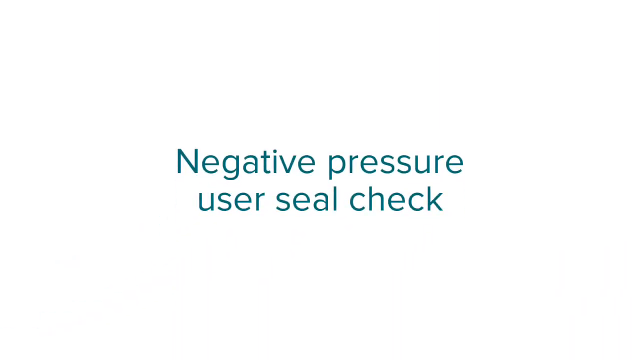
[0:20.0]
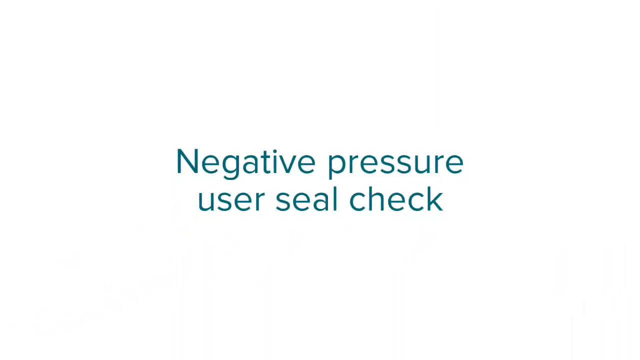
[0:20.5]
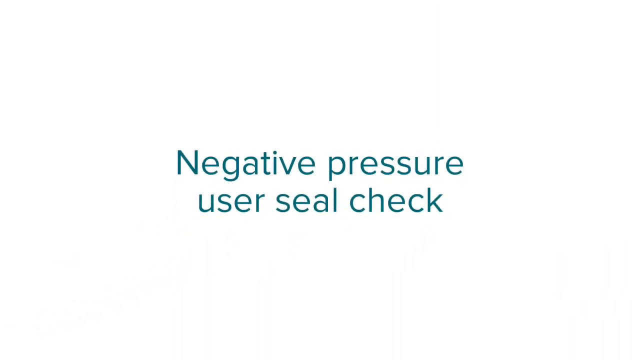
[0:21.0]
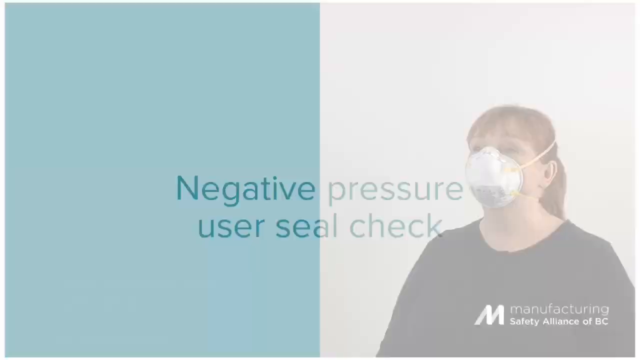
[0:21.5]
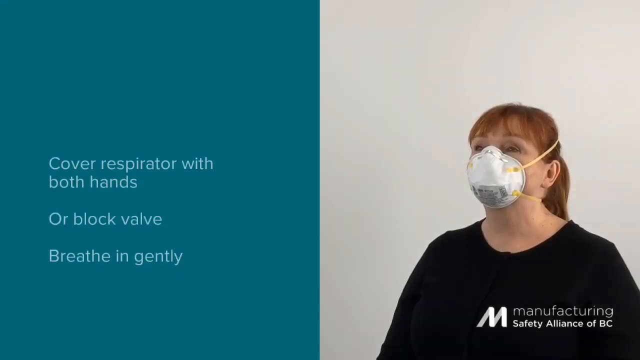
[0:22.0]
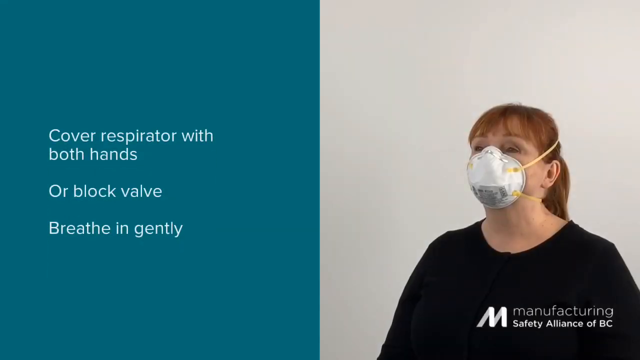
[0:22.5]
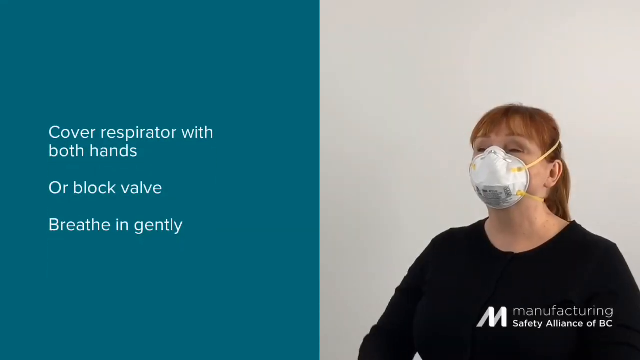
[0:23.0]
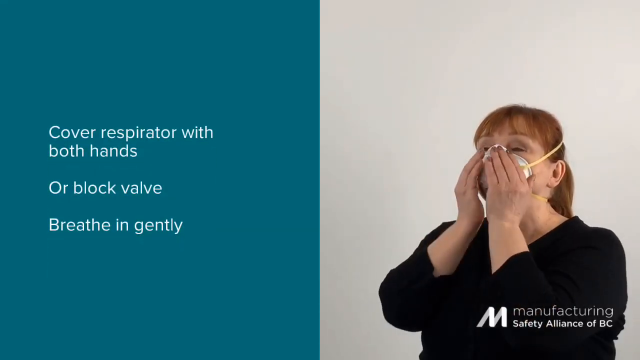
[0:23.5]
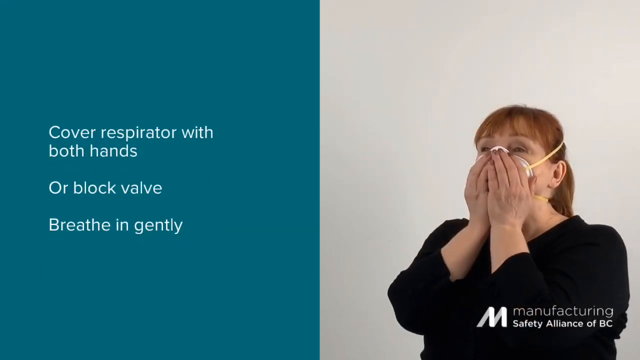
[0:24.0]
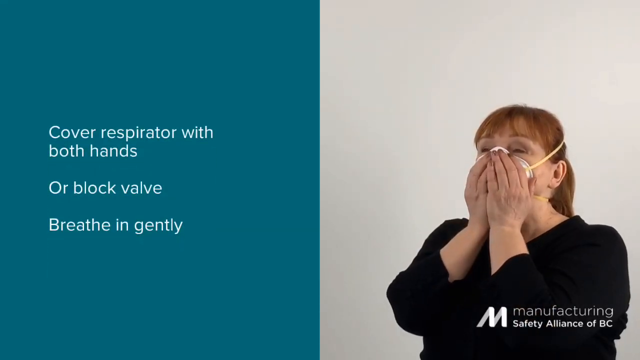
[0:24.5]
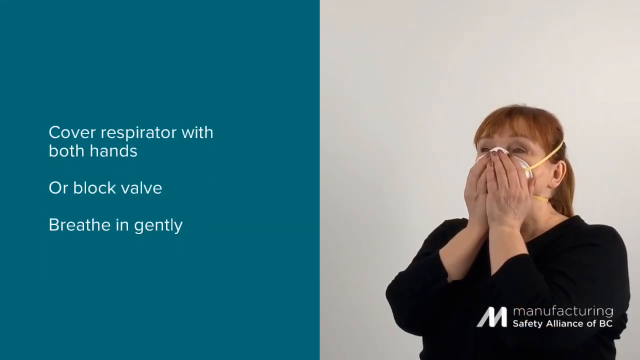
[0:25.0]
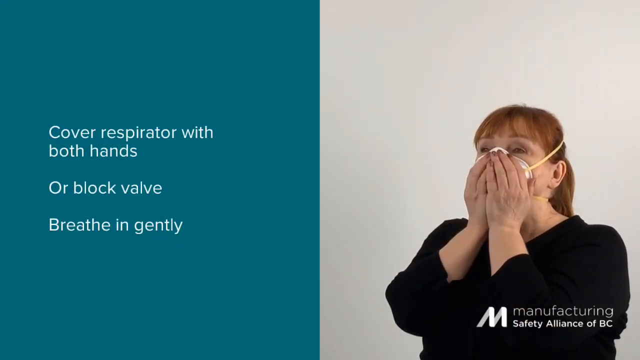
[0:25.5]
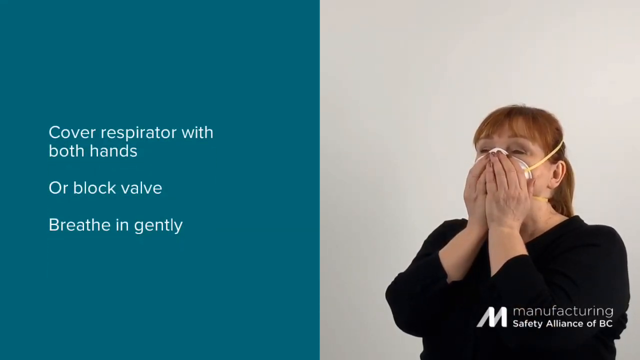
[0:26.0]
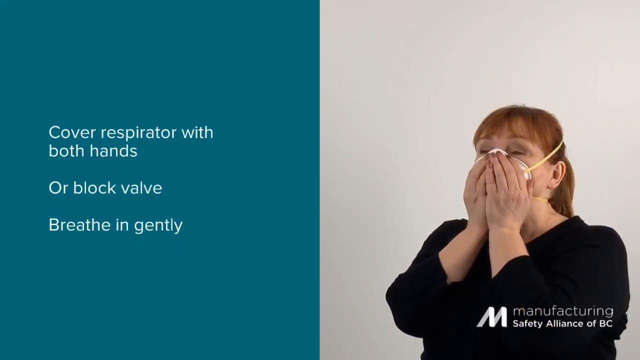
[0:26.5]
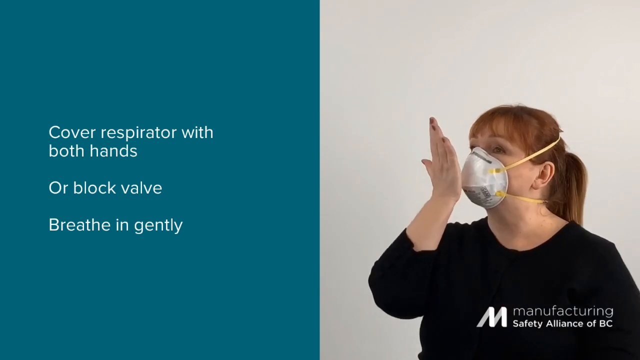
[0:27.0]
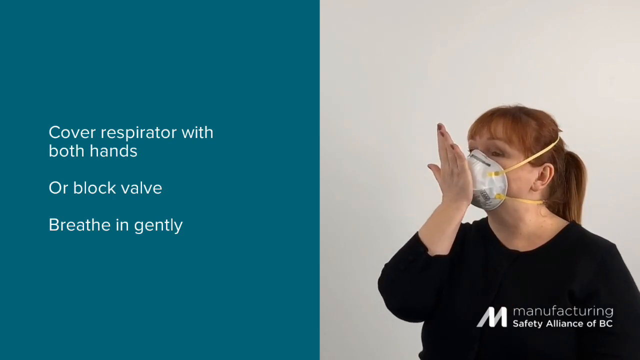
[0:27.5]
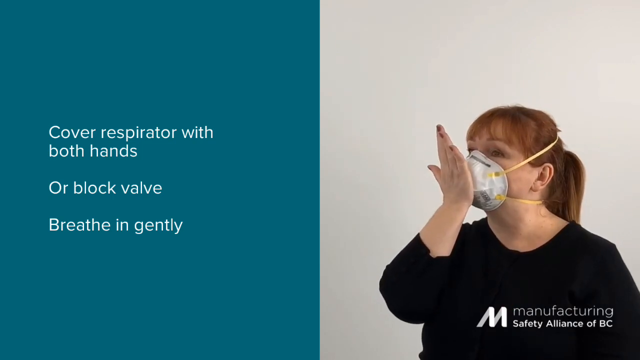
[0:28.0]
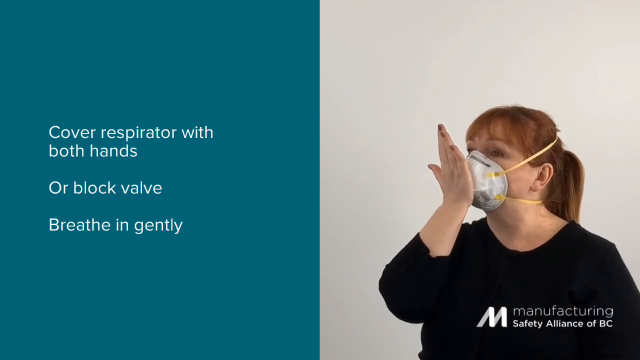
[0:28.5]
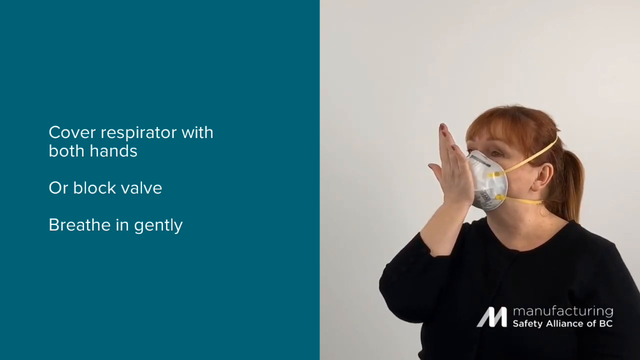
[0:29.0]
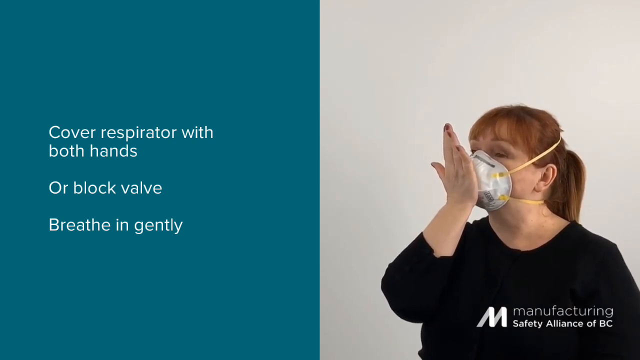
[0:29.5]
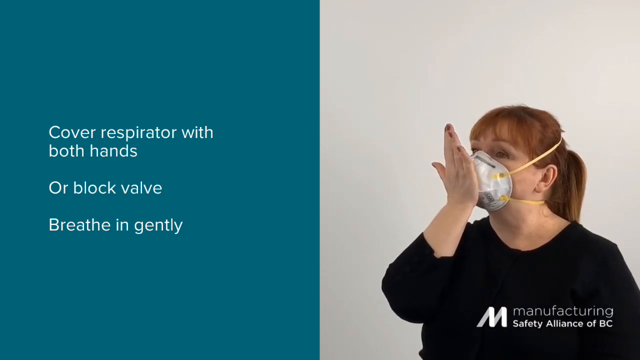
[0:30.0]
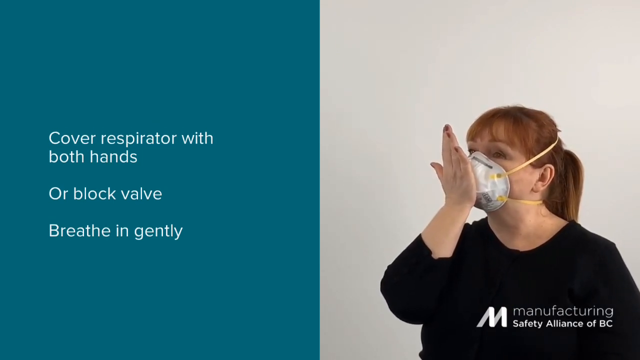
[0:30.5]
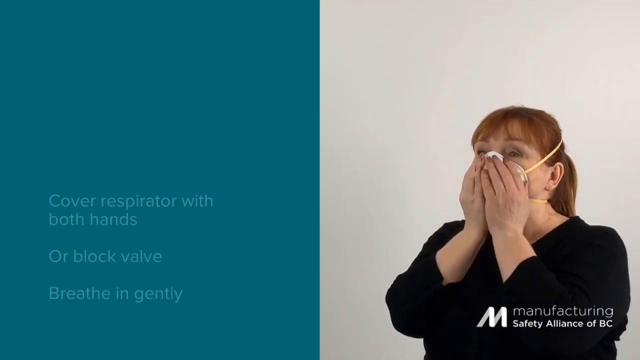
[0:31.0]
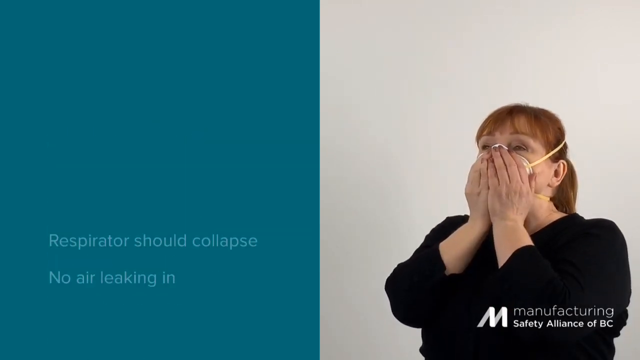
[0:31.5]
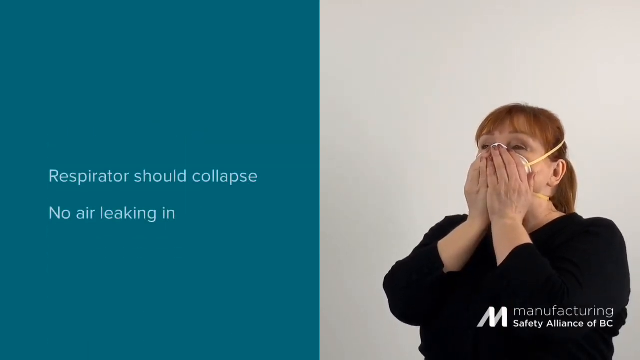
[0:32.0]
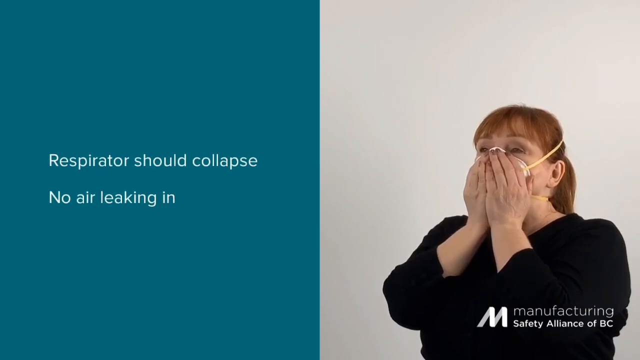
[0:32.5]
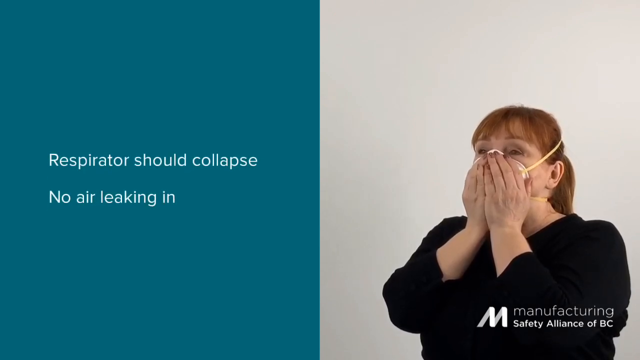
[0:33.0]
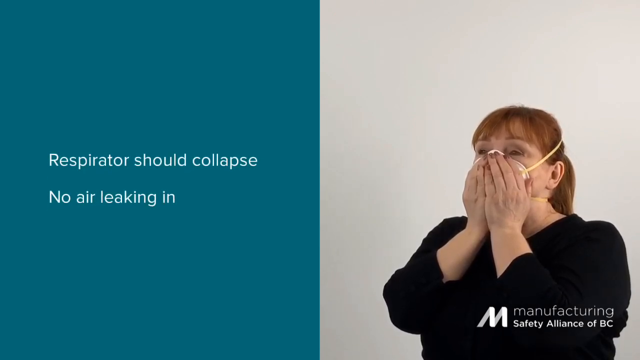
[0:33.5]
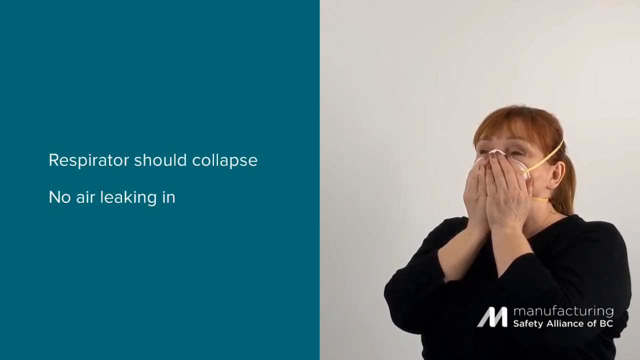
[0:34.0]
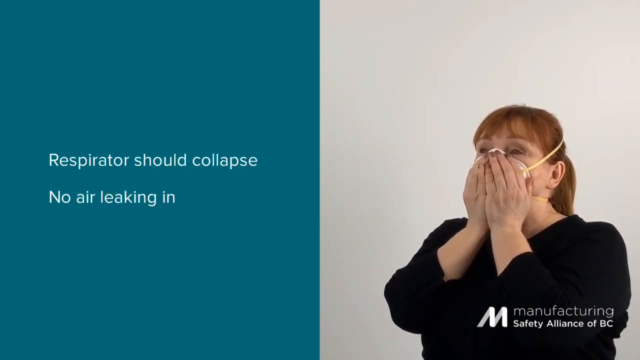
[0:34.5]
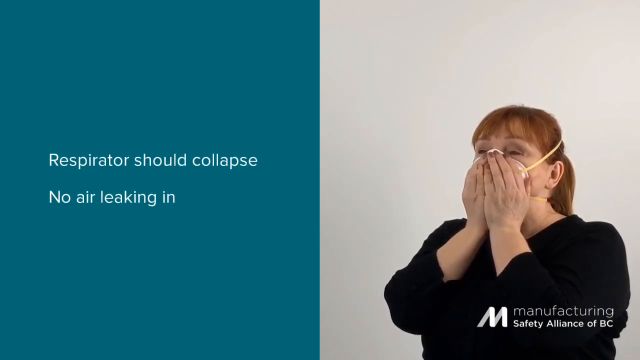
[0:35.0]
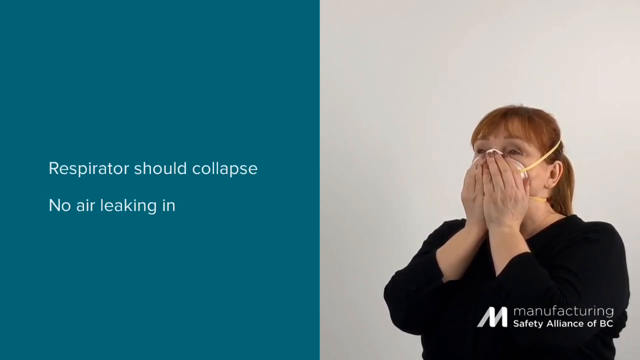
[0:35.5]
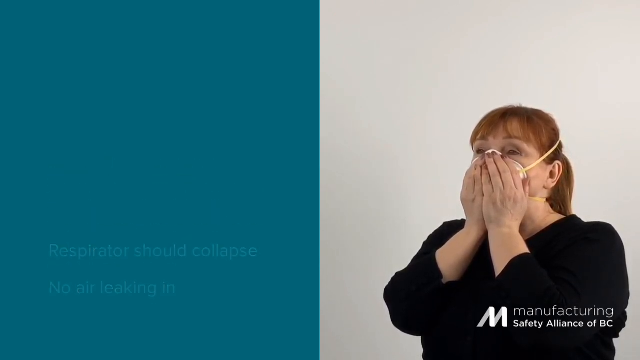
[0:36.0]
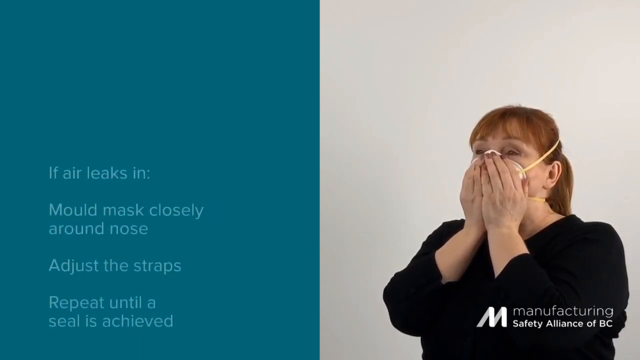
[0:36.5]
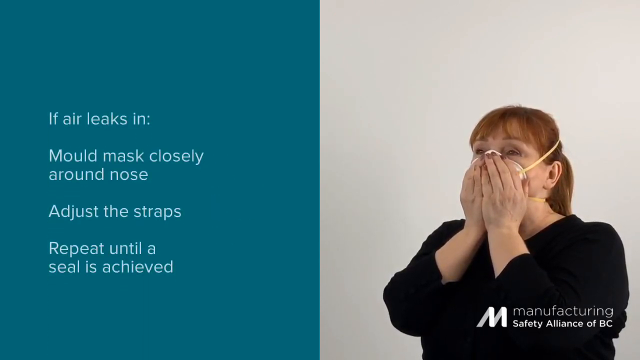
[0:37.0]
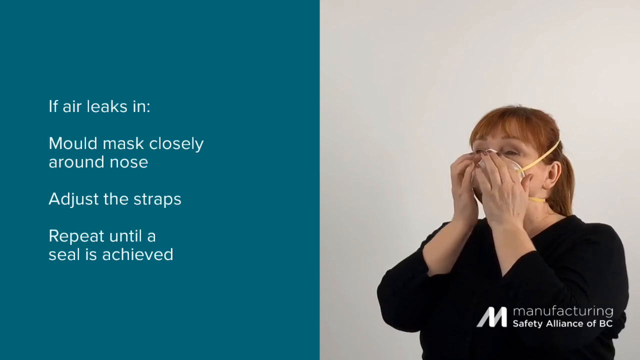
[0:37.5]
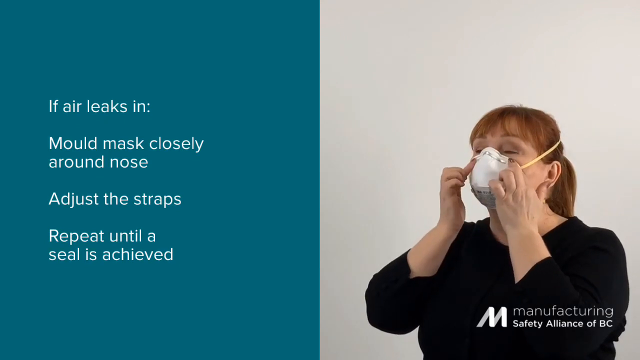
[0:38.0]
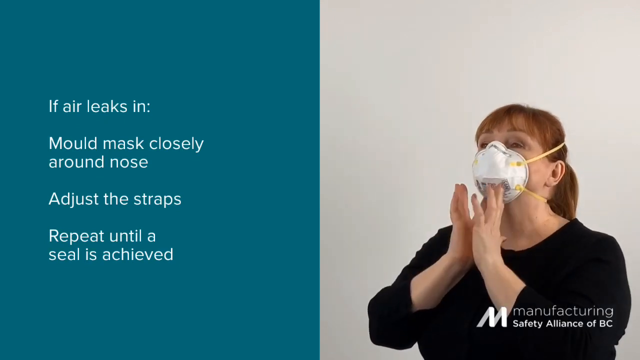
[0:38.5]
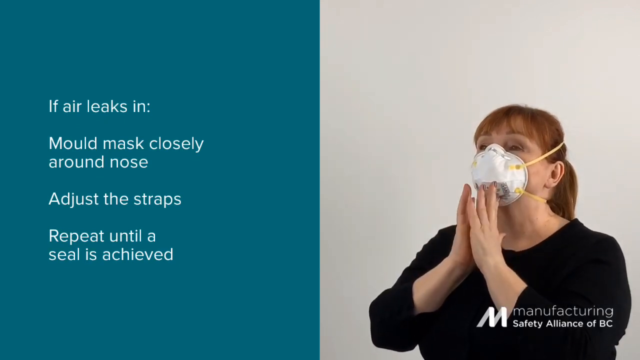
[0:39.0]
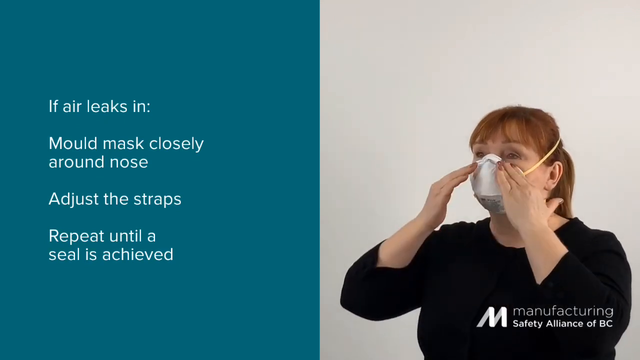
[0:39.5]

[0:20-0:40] A white background with a gray accent at the bottom shows greenish-gray lettering across the center: "Negative pressure, user seal check." The video moves to a split screen. On the right, a woman with long brown hair tied up in back, wearing a white N95 mask with double straps and a dark crew-neck sweater, stands in front of a neutral light gray background. The left side has a green background with light-colored lettering: "Cover respirator with both hands or block valve. Breathe gently." The woman performs this action, putting both hands over the front of the mask she is wearing and breathing gently. She also places her palm against the front of the mask to show where a valve would be blocked; her mask has no valve, so she demonstrates this for instructional purposes. On the left, the text "Respirator should collapse. No air leaking in." appears. She then adjusts the nose clip, moves her hands down below the mask, and presses on either side of her nose, while the left side shows the text "If air leaks in, mold mask closely around nose. Adjust the straps. Repeat until a seal is achieved."